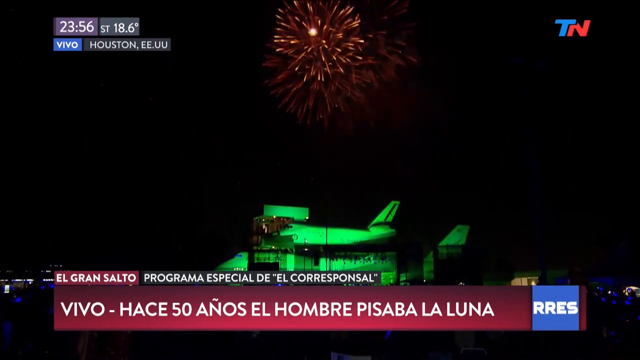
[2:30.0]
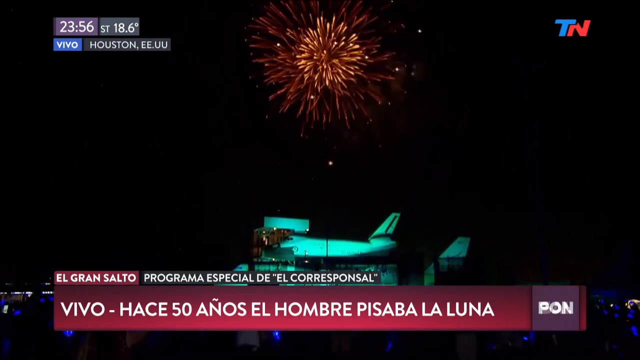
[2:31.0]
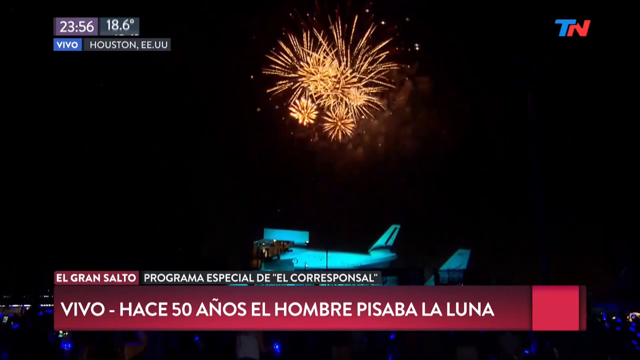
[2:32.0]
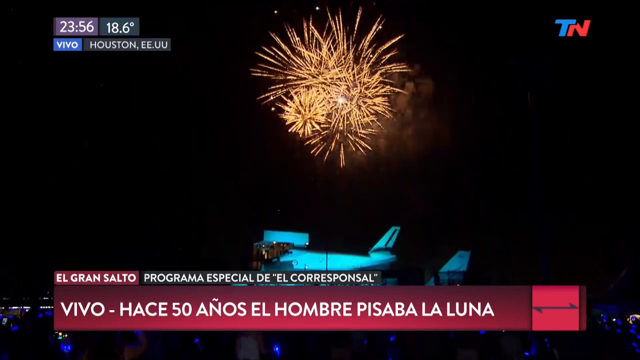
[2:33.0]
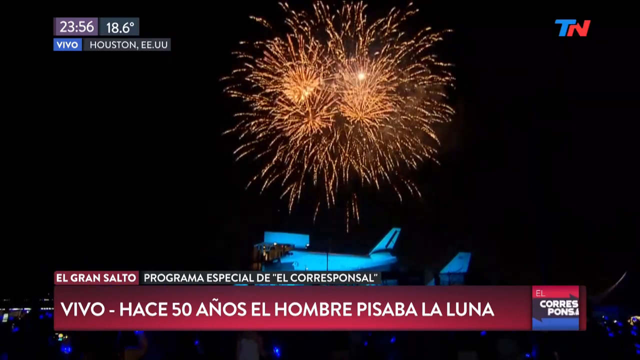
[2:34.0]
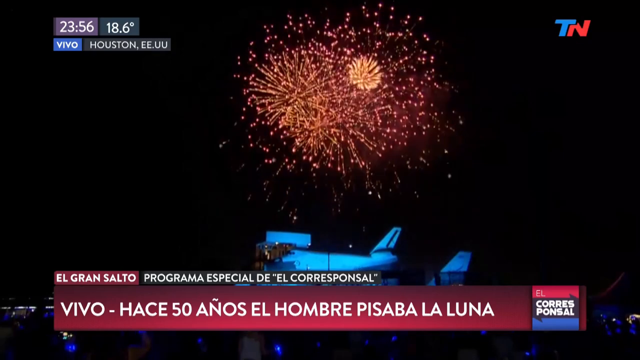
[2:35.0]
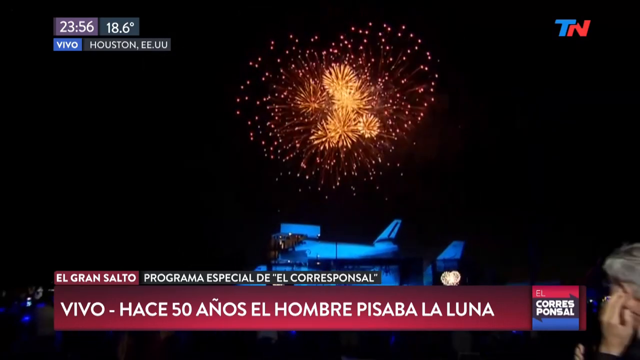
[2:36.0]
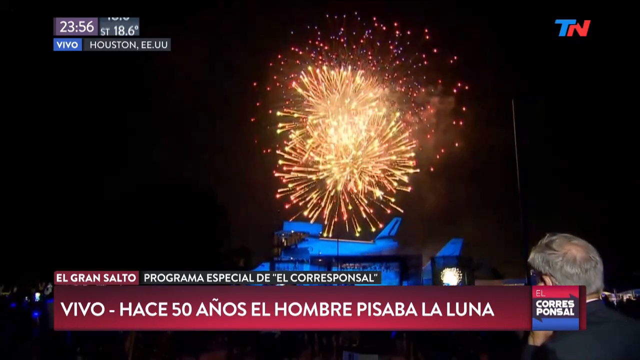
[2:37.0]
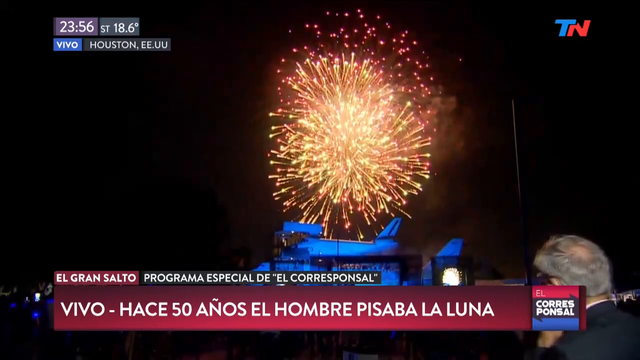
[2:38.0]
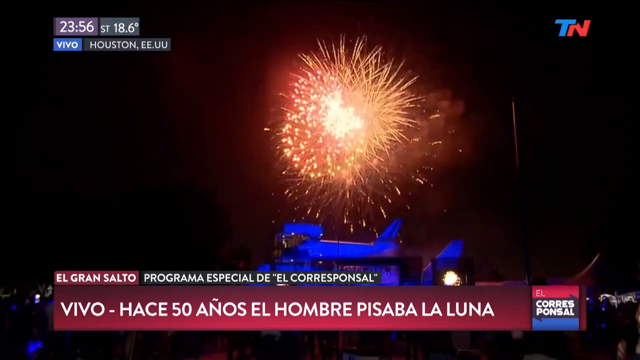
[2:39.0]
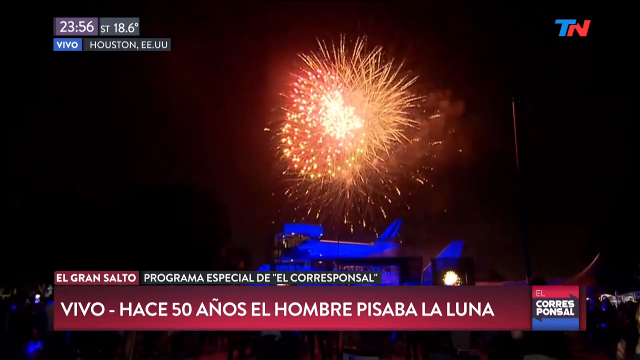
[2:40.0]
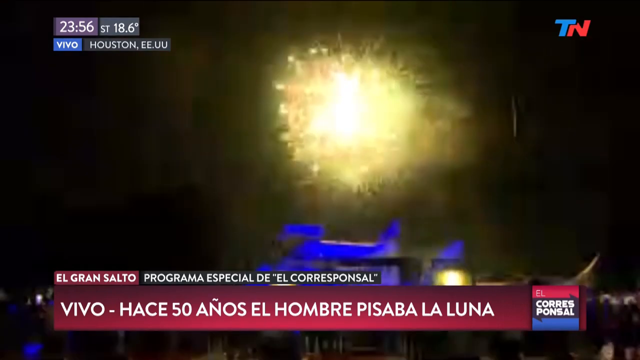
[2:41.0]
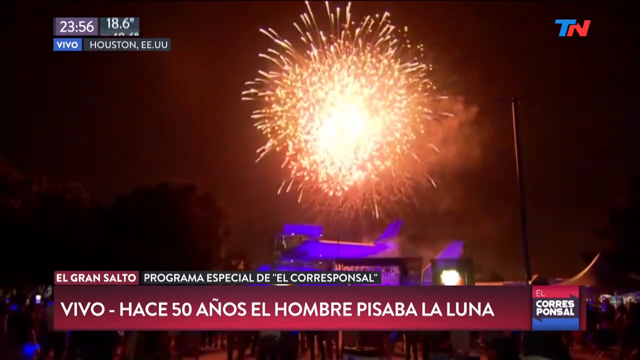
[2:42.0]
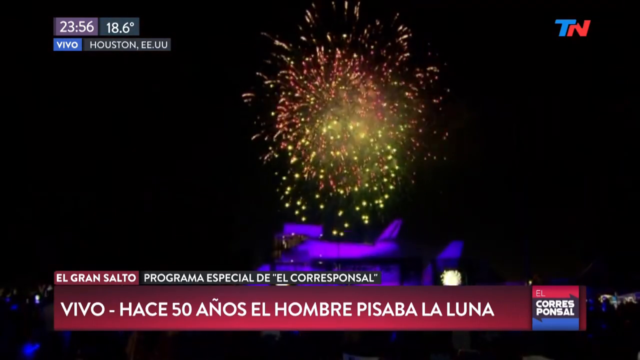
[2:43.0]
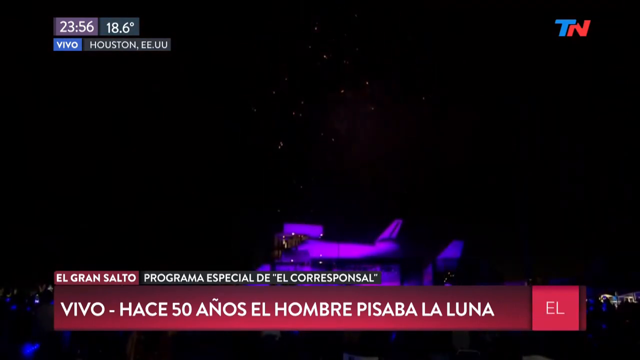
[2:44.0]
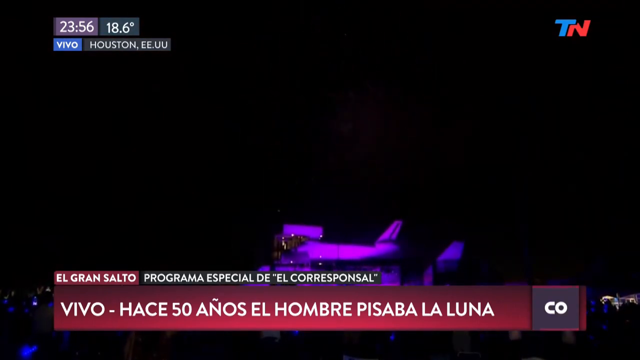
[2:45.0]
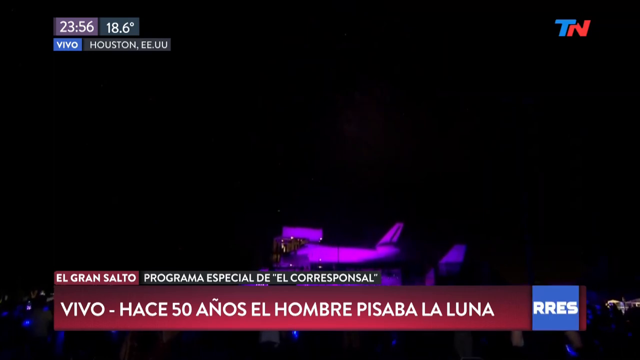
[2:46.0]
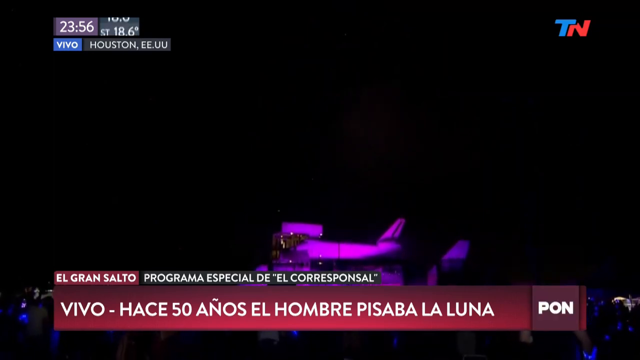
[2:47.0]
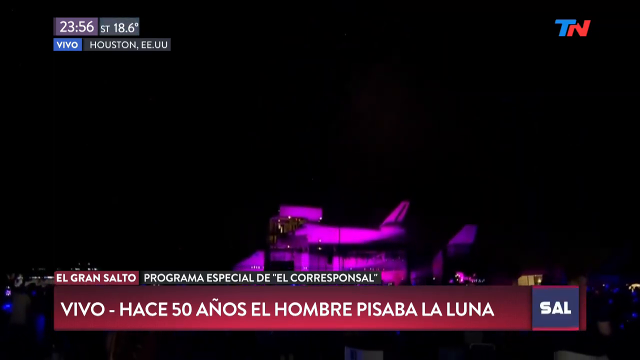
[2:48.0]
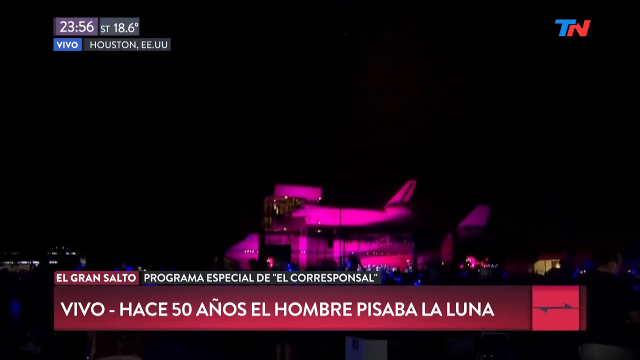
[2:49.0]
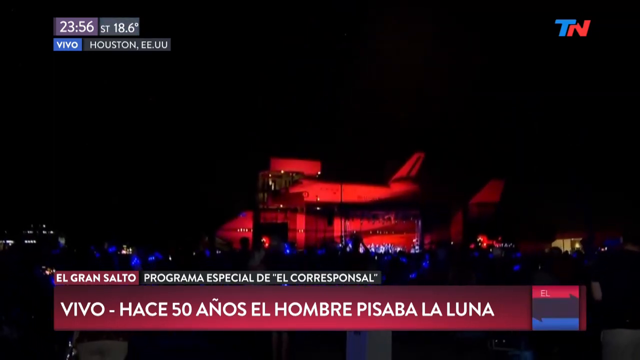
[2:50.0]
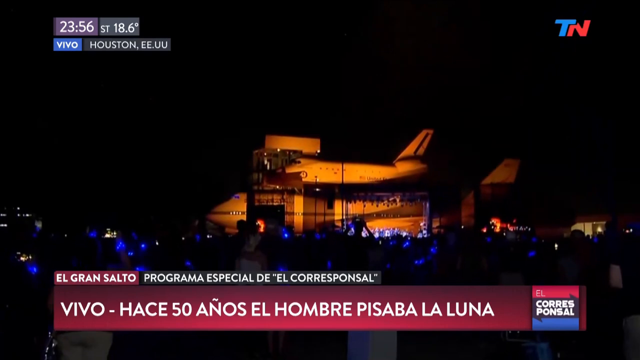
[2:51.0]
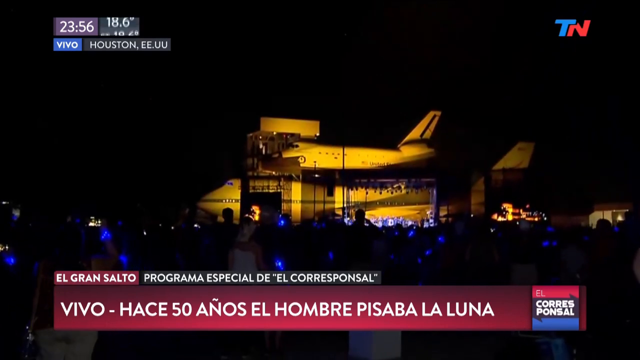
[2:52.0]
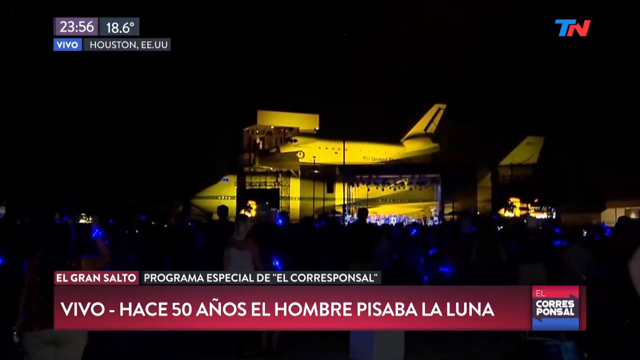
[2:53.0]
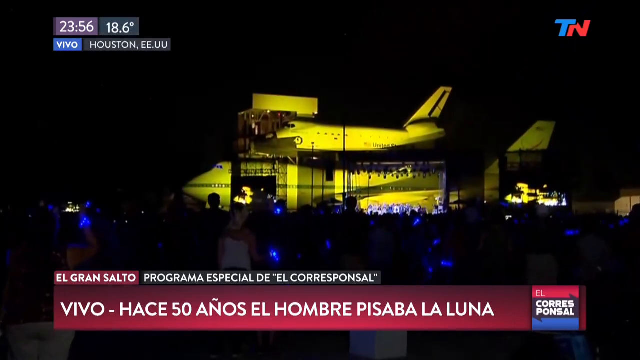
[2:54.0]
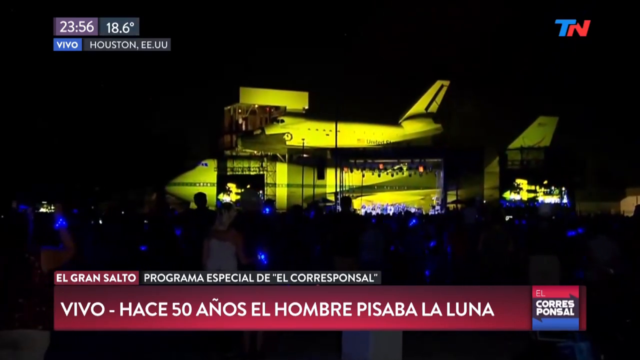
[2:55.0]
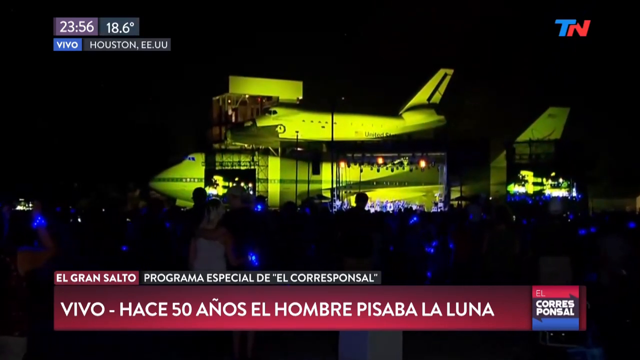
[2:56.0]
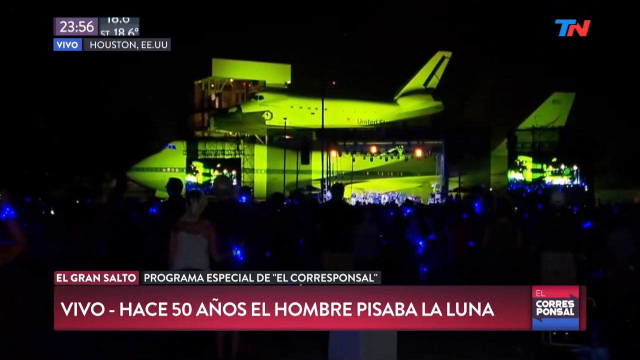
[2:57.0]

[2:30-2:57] Fireworks in many different colors go off with large explosions. Many people in the crowd hold their cameras up. A male news reporter appears, also looking at the fireworks. The camera zooms in on the crowd, where everyone has their phones up, lighting up the sky. The plane is still shown glowing with different colors. Most of the words at the bottom of the screen are in Spanish.